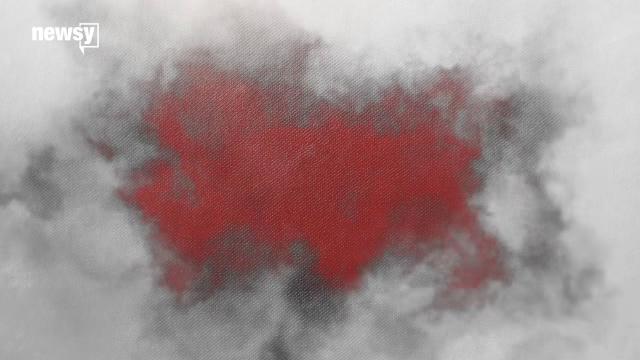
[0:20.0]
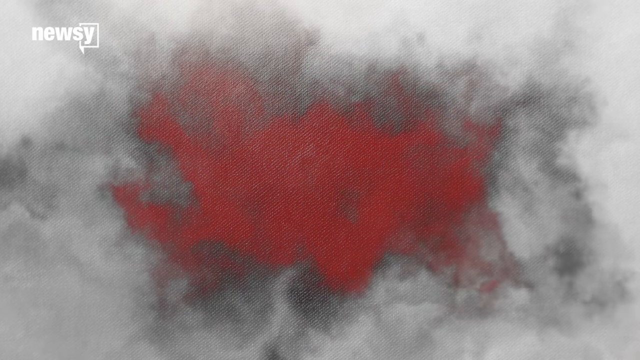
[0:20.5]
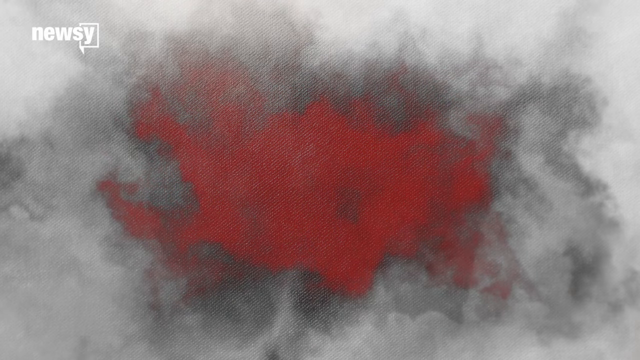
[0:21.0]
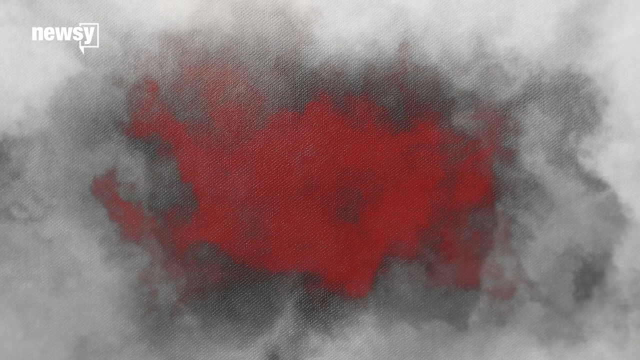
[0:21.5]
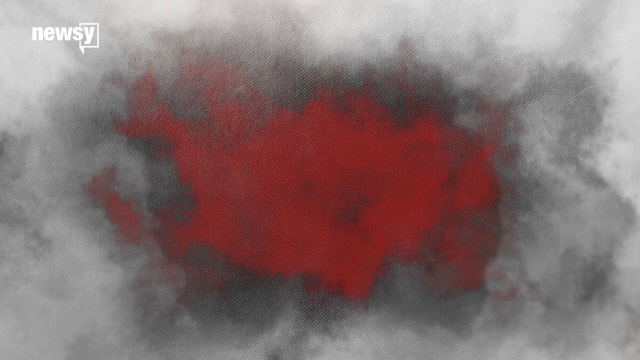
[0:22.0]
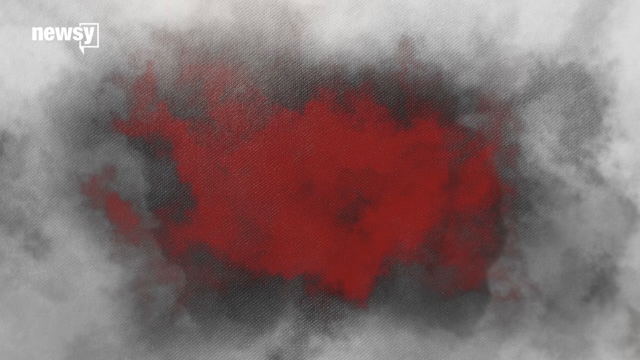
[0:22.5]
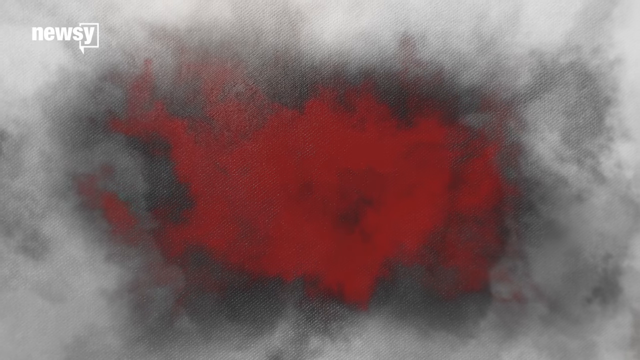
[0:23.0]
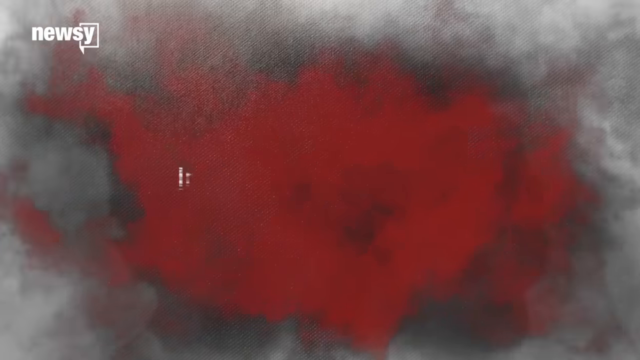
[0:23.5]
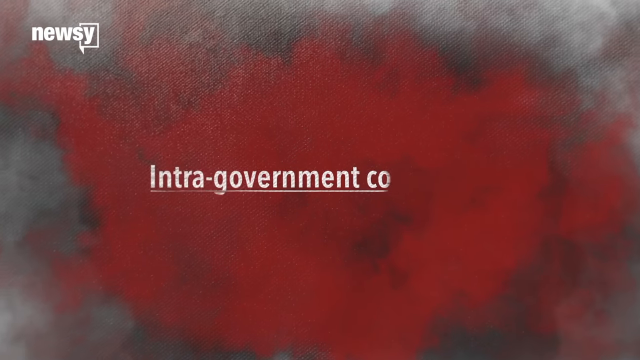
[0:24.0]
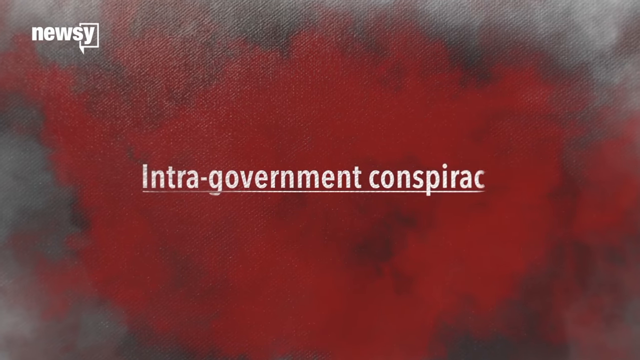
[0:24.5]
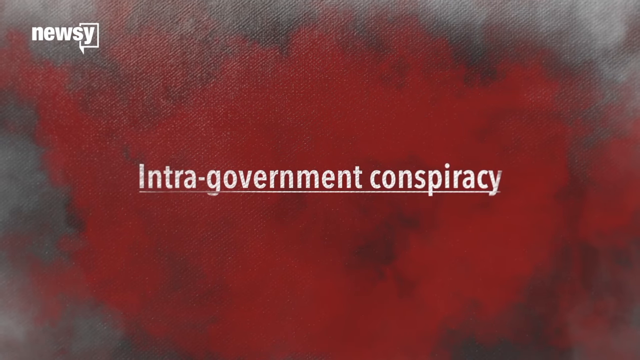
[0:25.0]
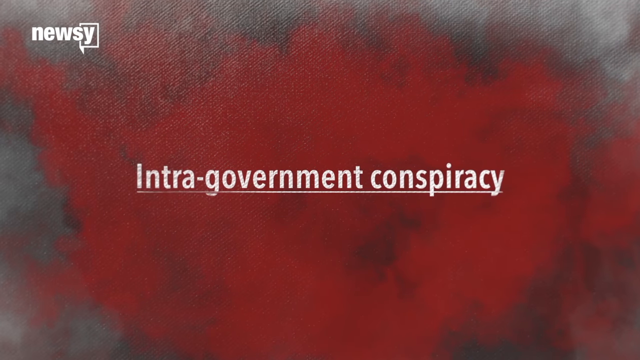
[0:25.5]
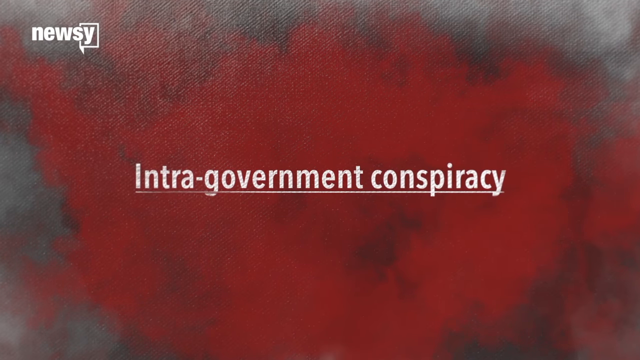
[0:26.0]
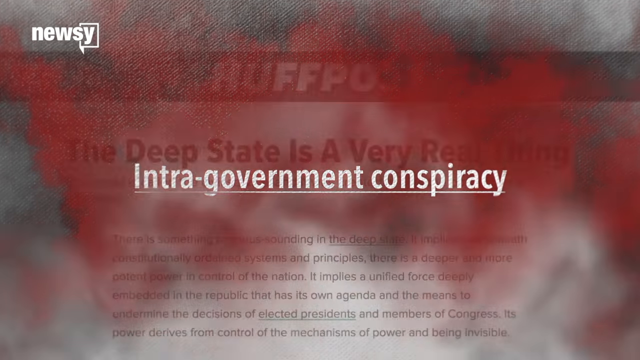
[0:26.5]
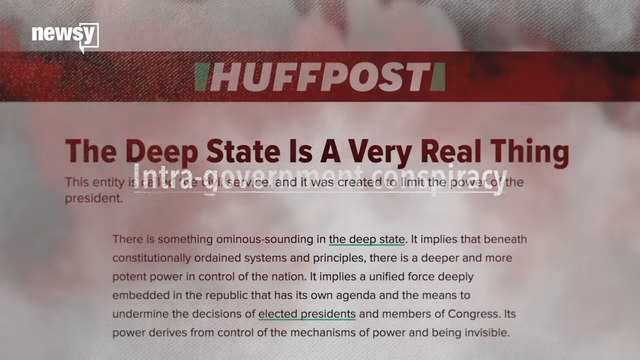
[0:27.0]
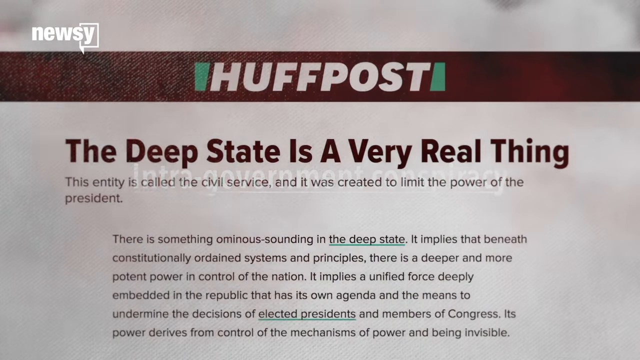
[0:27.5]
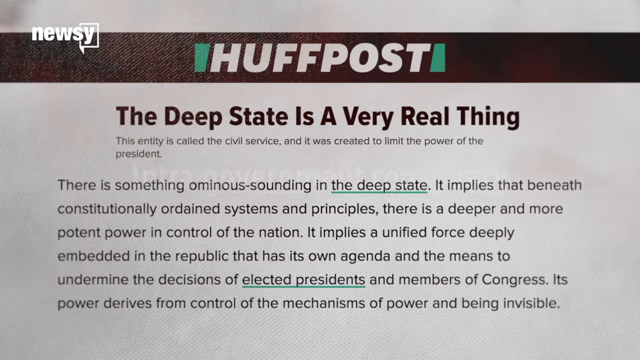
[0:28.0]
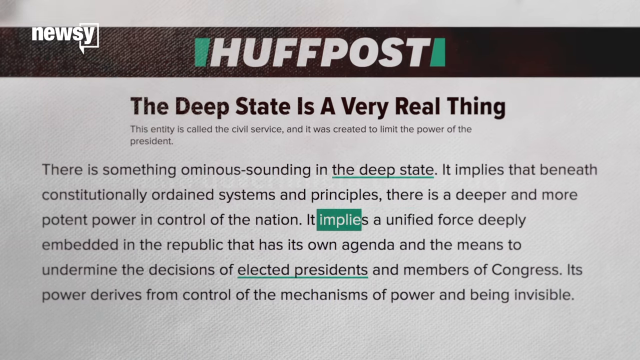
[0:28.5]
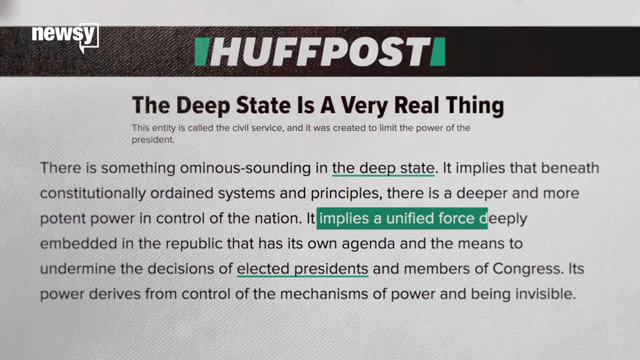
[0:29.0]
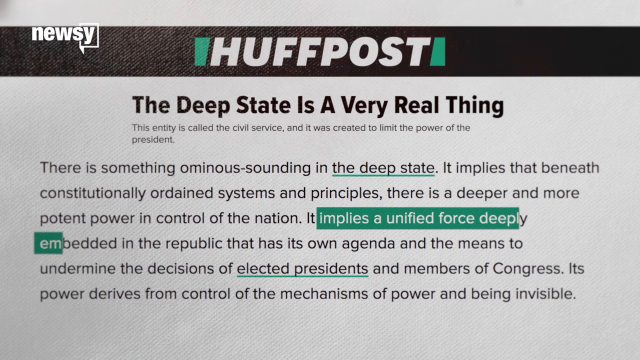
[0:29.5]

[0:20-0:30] Red powdery smoke with some gray mixed in fills the background, and white words slowly come up on the screen reading "intra government conspiracy." Underneath, an article from HuffPost pops up reading "the deep state is a very real thing" and "this entity is called the civil service and it was created to limit the power of the President." The paragraph underneath reads "there is something ominous sounding in the deep state. It implies that beneath constitutionally ordained systems and principles, there is a deeper and more potent power in control of the nation. It implies a unified force deeply embedded in the Republic that has its own agenda and the means to undermine the decisions of elected presidents and members of Congress." An area is then made bigger and highlighted with a green background where it says "implies a unified force deeply embedded in the."